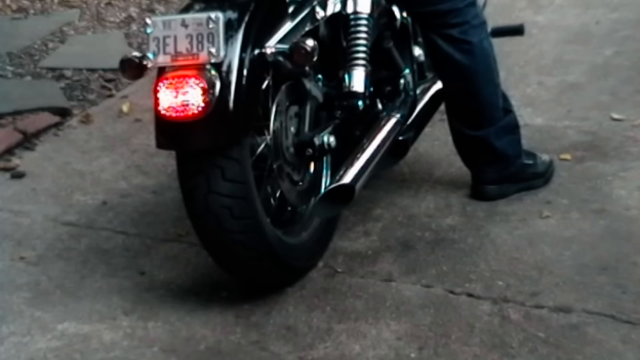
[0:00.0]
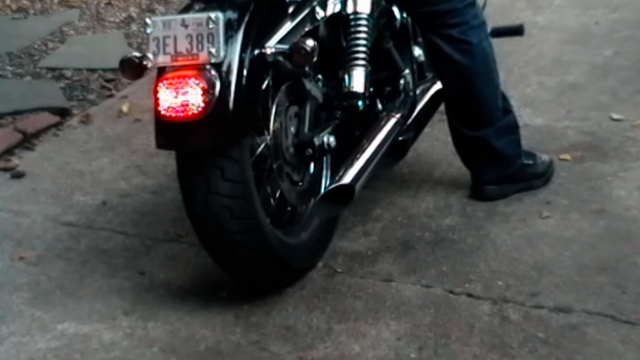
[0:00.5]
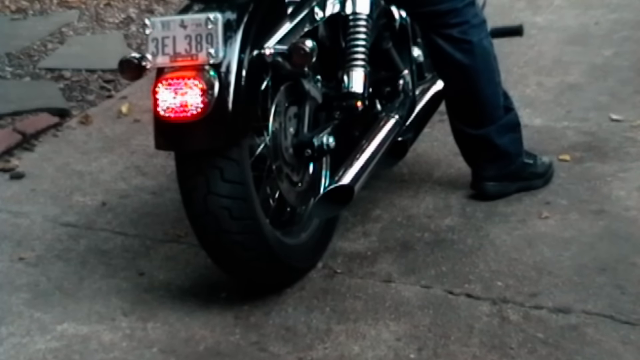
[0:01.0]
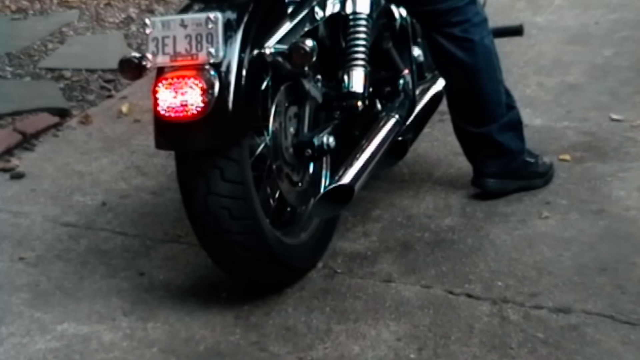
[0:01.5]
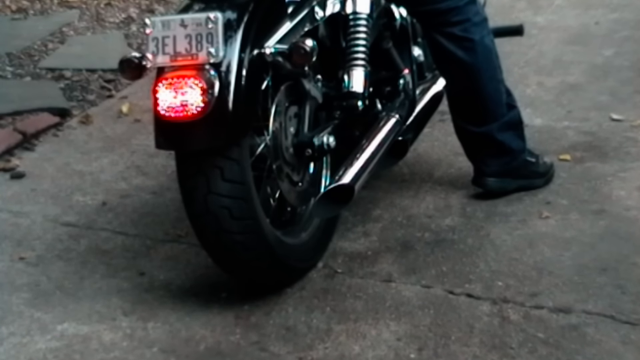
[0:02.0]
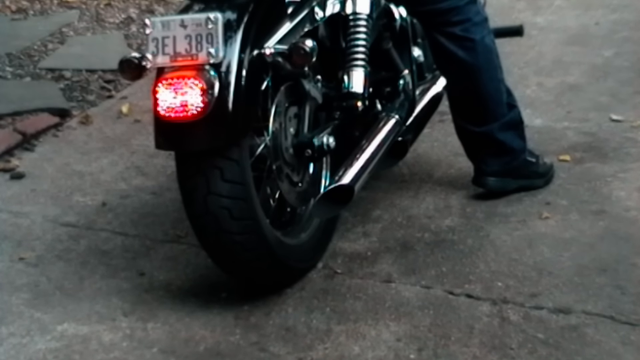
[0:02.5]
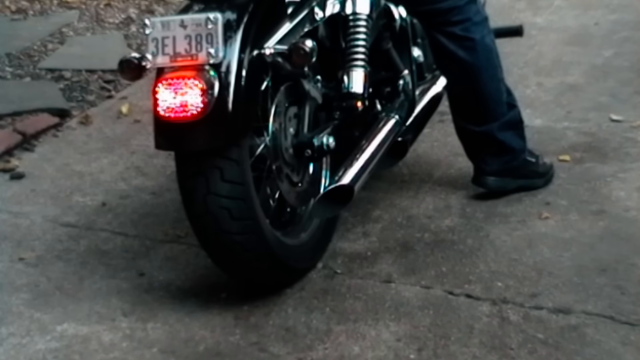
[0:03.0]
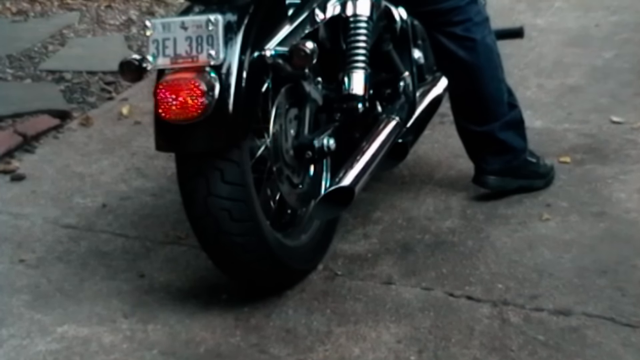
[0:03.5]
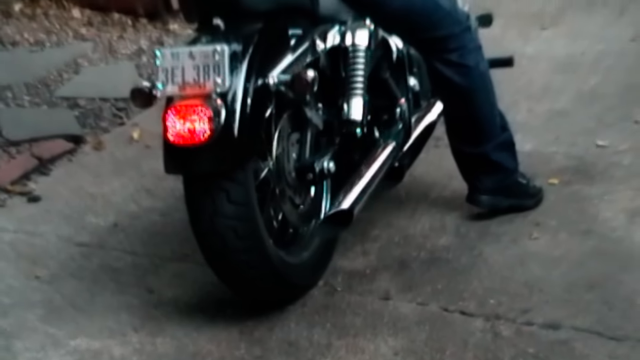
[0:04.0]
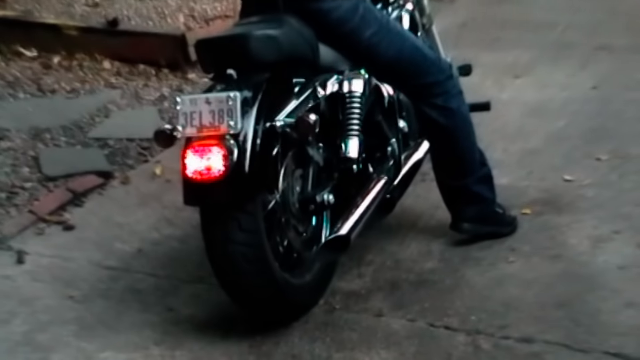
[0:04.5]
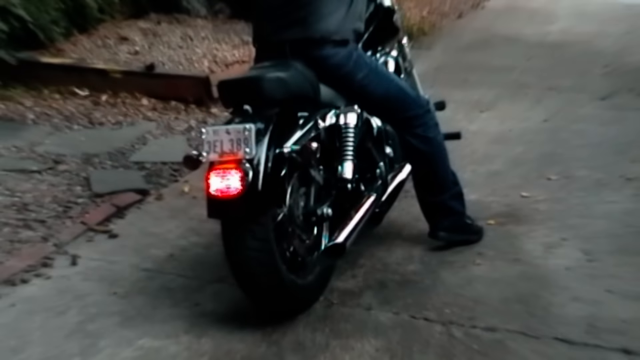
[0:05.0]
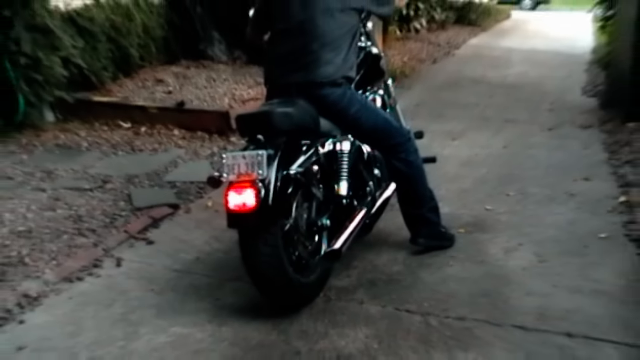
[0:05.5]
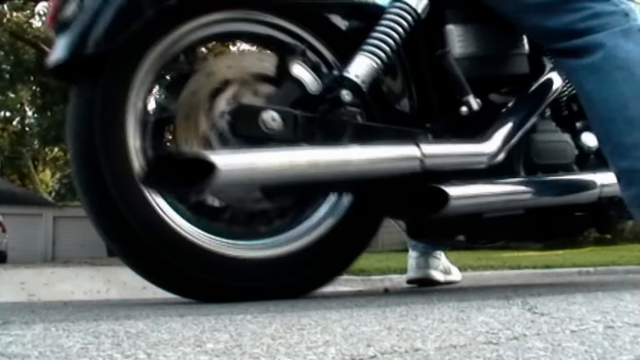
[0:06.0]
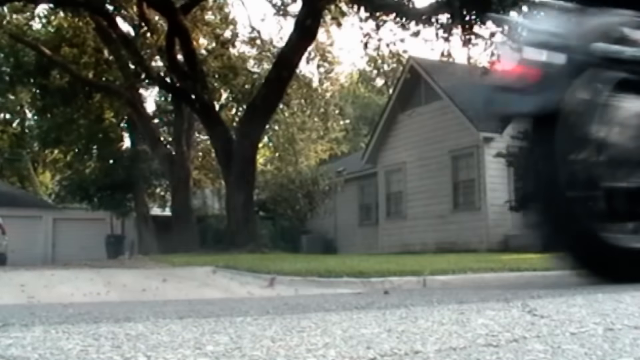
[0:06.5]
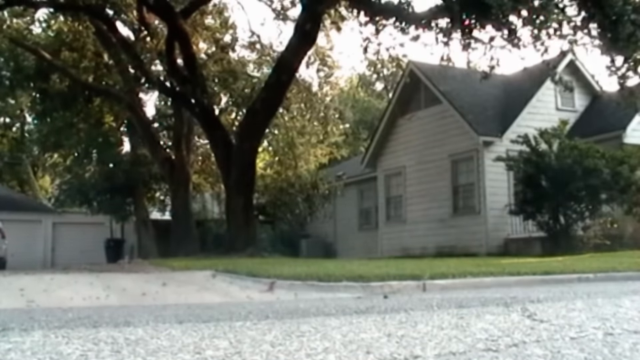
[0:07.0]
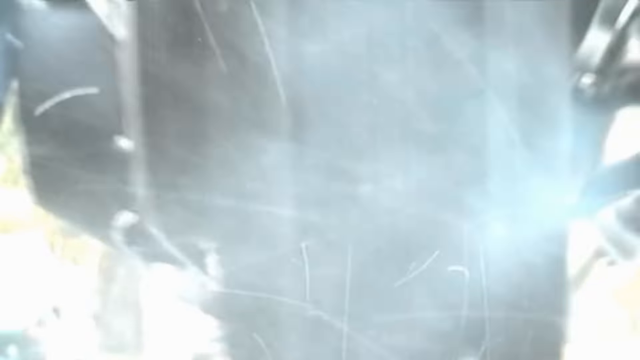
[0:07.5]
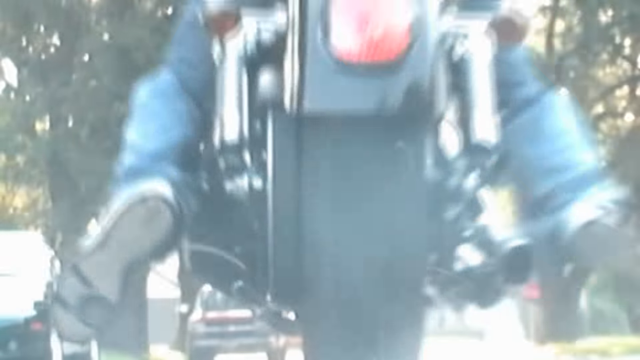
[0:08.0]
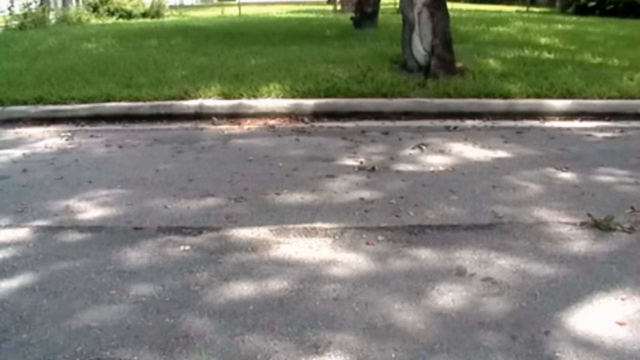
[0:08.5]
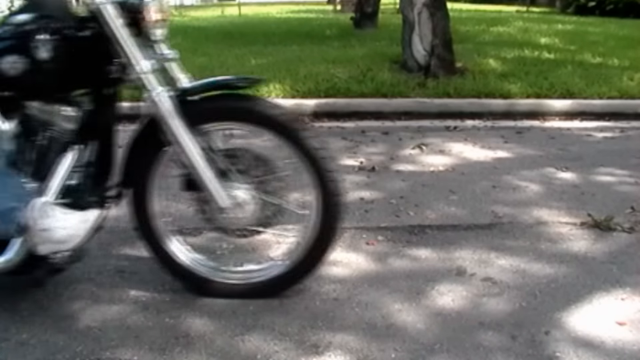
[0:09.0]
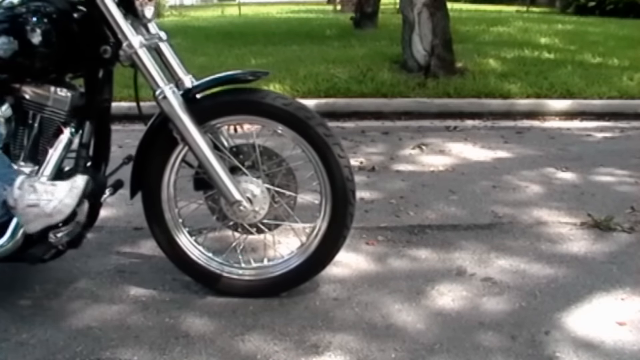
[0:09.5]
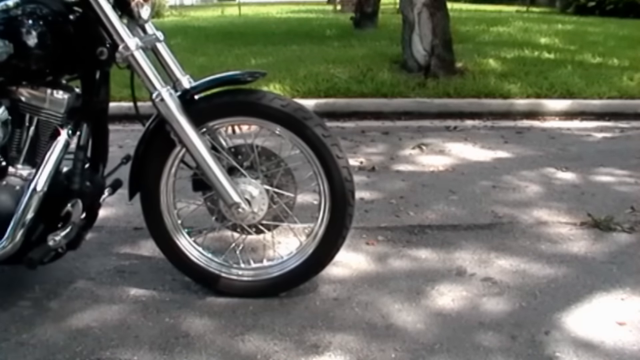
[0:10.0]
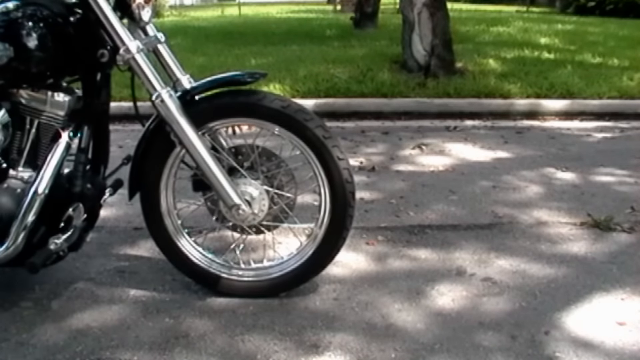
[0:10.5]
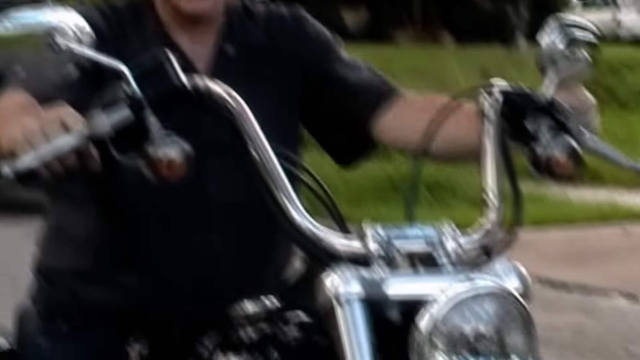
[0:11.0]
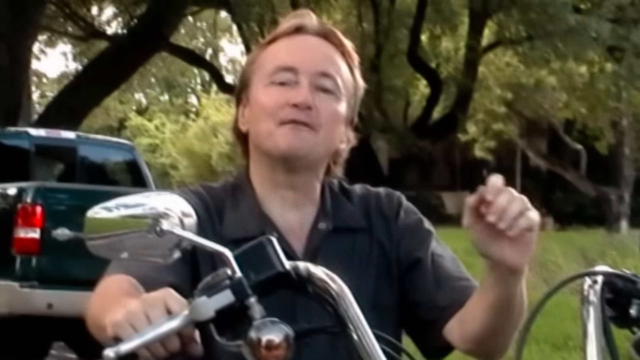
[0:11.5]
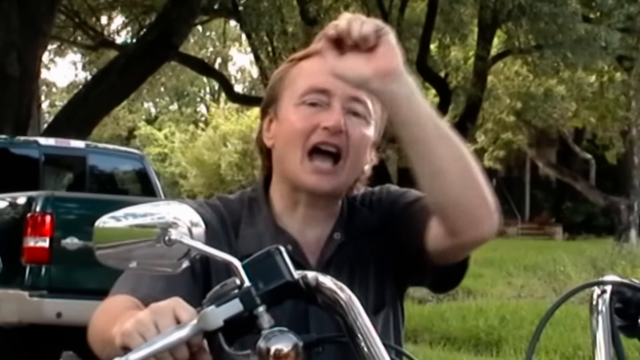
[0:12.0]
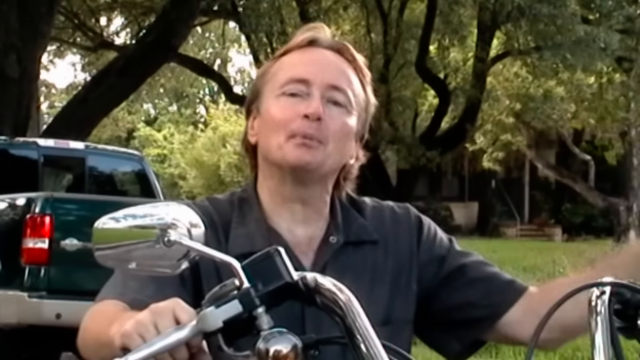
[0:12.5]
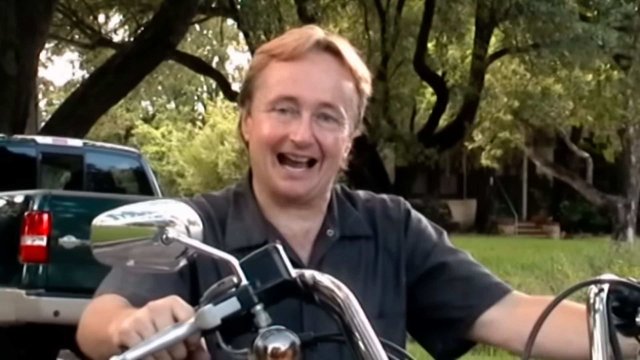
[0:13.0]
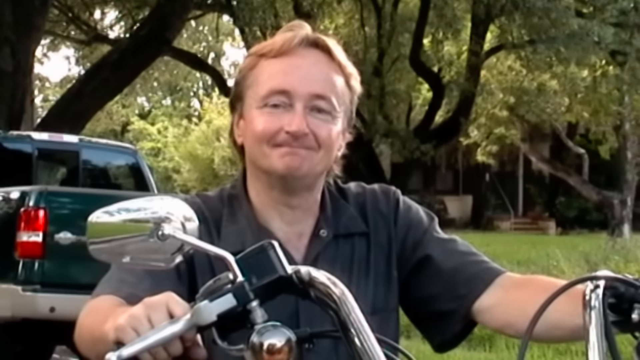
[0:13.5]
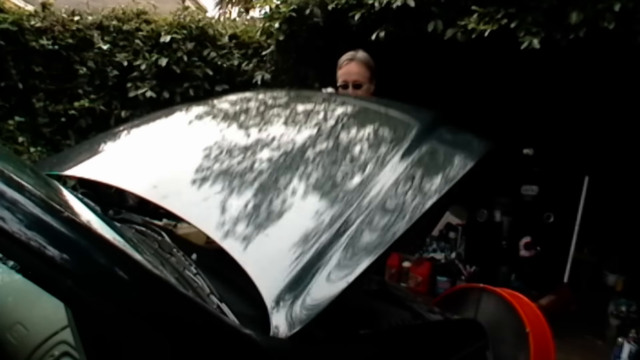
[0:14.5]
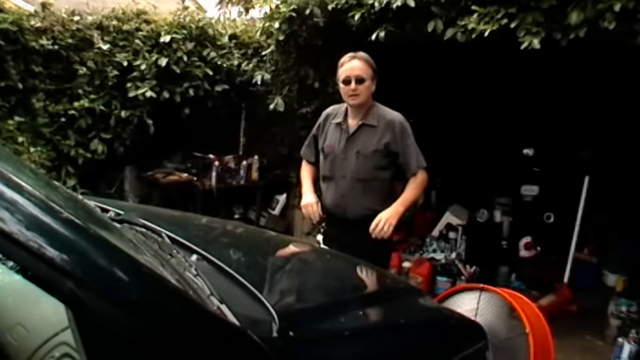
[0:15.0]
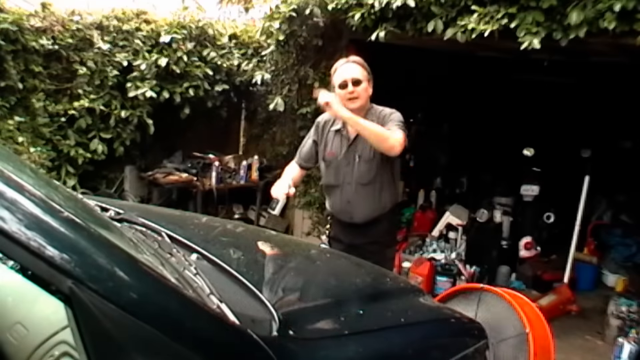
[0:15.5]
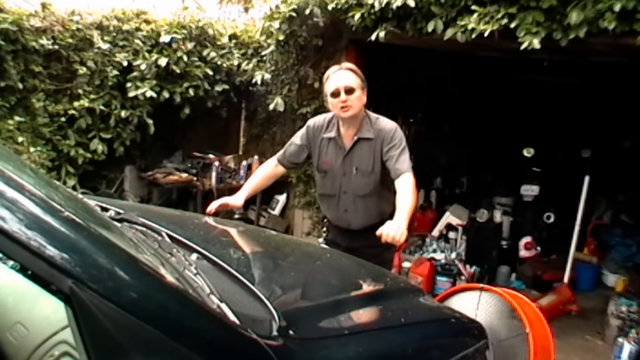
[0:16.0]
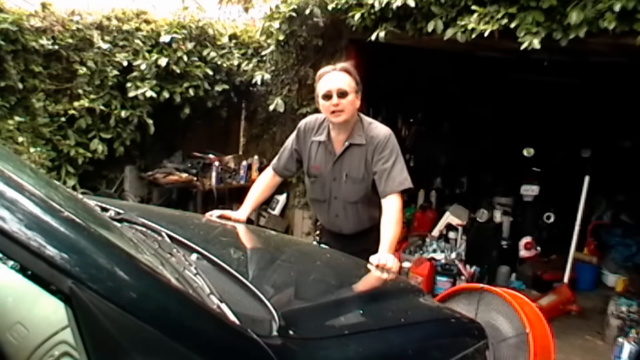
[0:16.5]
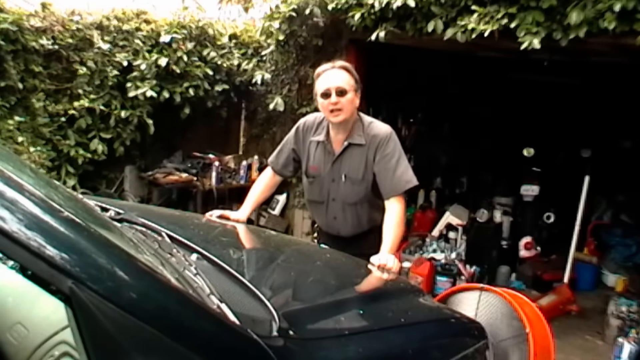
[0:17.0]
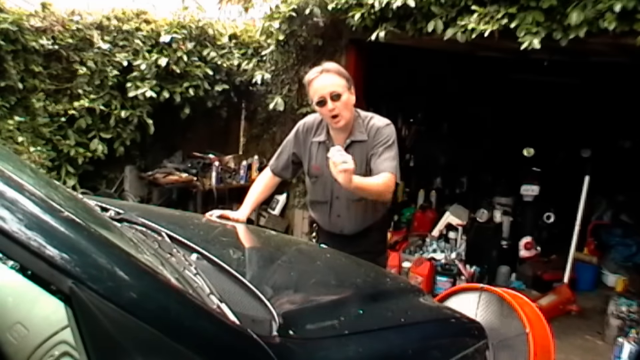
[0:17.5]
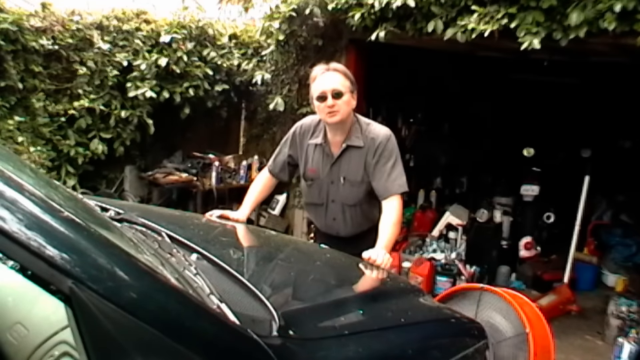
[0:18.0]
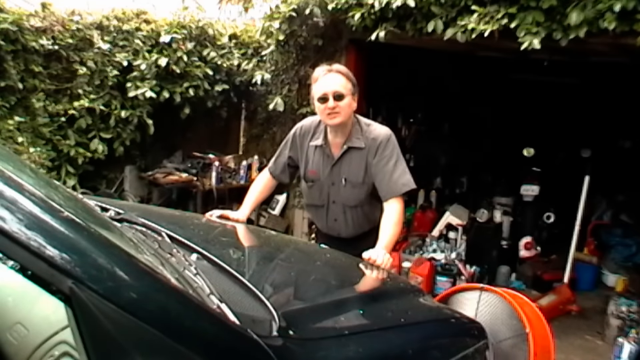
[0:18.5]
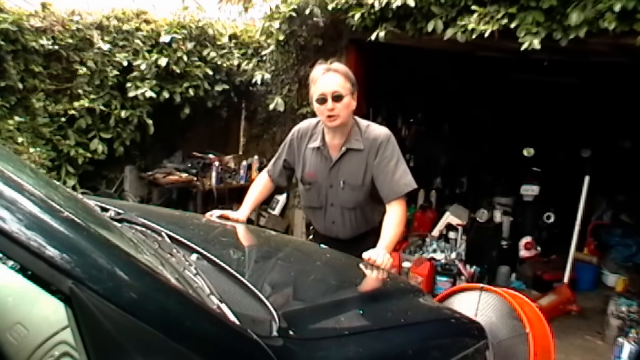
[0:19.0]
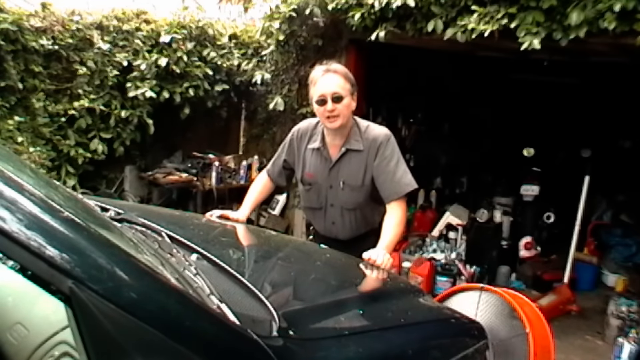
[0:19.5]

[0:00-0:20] A person is on a motorcycle, and the shot starts at the very bottom of the bike, showing the back wheel and the rider's foot on the motorcycle. The rider takes off very quickly. The motorcycle is black, with a white light on the back along with a red brake light, a large fat tire in the back, and two large exhaust pipes on the side. The rider wears black pants and a black shoe. As the motorcycle moves quickly, the camera pans up a bit to the rider, who also wears a black jacket. The person on the motorcycle is then shown wearing white shoes. The scene changes from the motorcycle to a man at the hood of a vehicle. He wears a gray shirt and glasses and stands in front of what looks like a truck, with the hood open, looking inside. To the side of him, on or close to the floor, an orange fan with silver blades seems to be blowing.